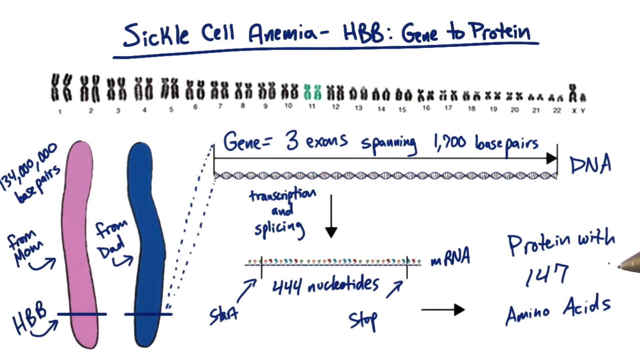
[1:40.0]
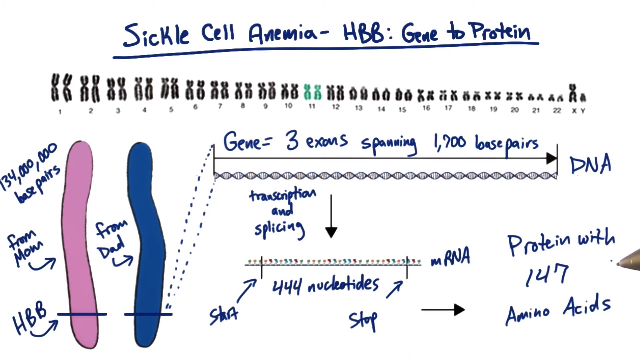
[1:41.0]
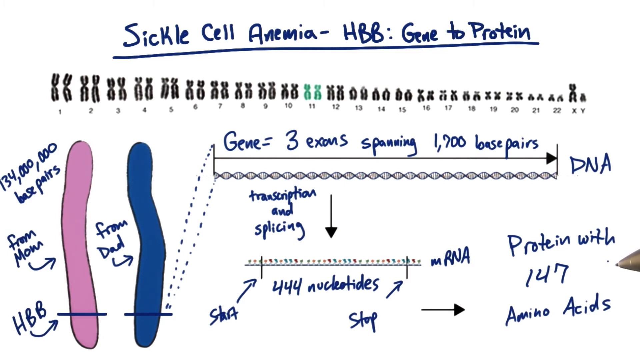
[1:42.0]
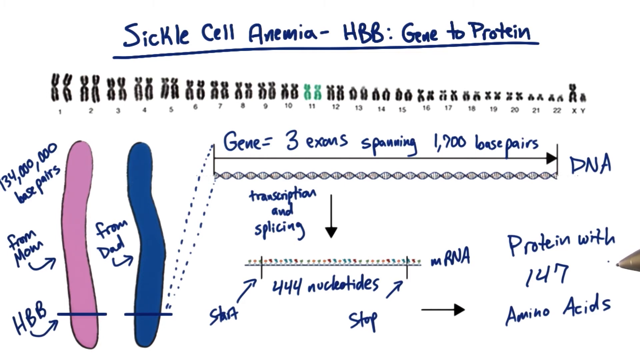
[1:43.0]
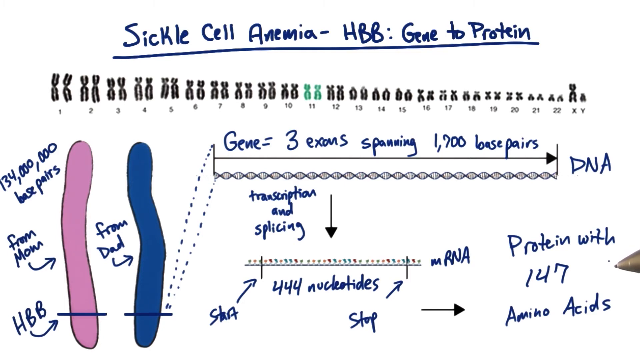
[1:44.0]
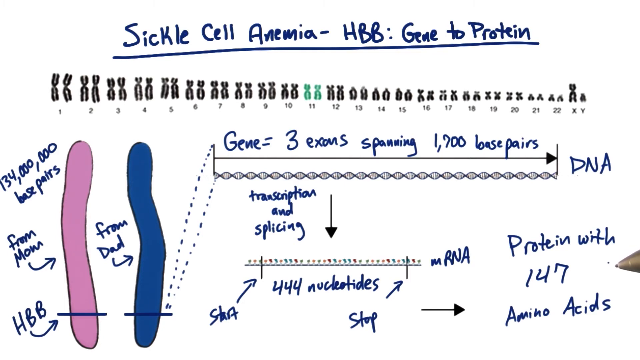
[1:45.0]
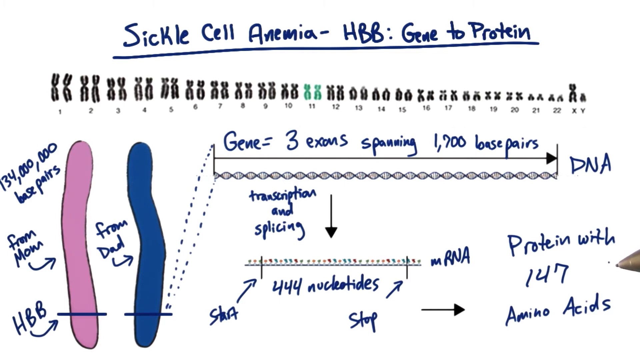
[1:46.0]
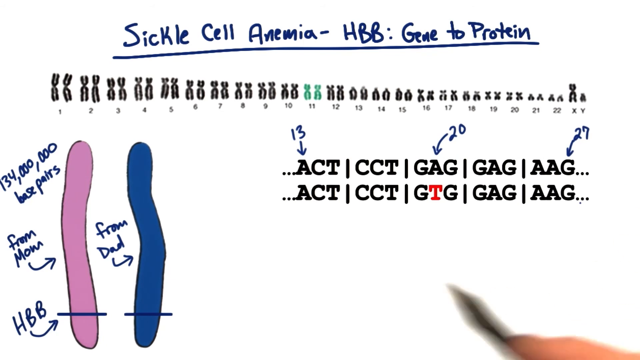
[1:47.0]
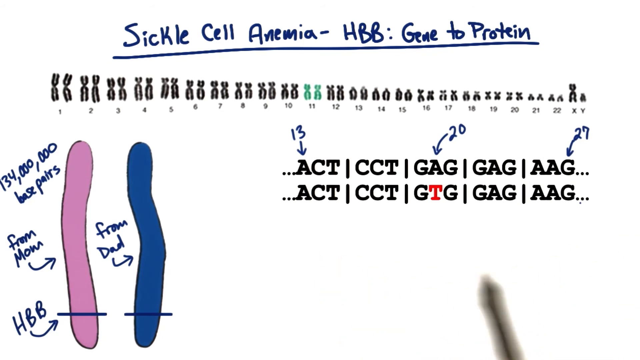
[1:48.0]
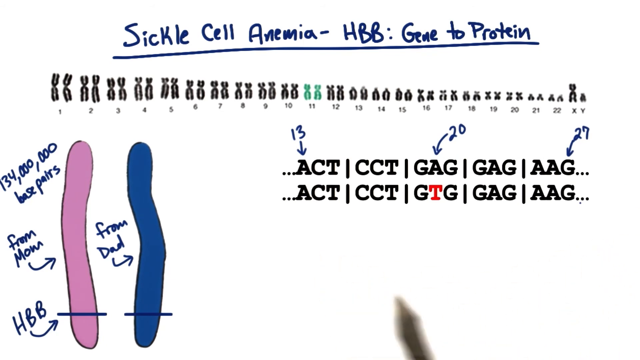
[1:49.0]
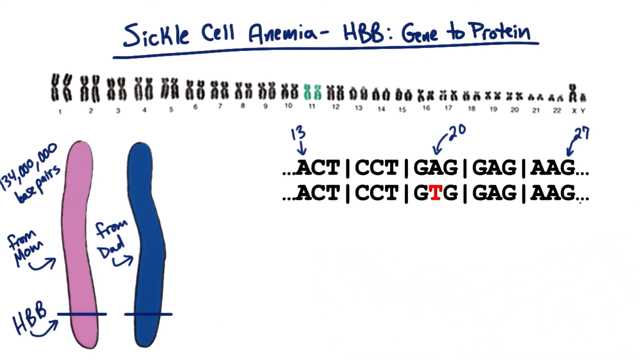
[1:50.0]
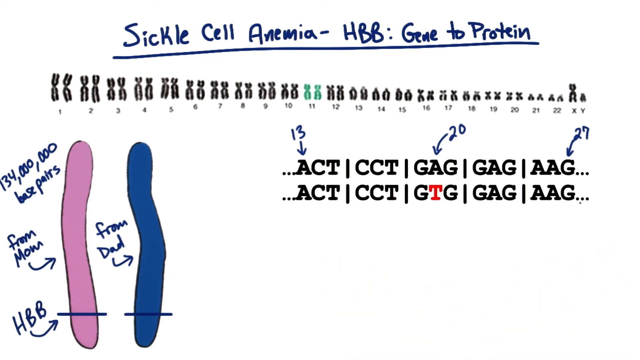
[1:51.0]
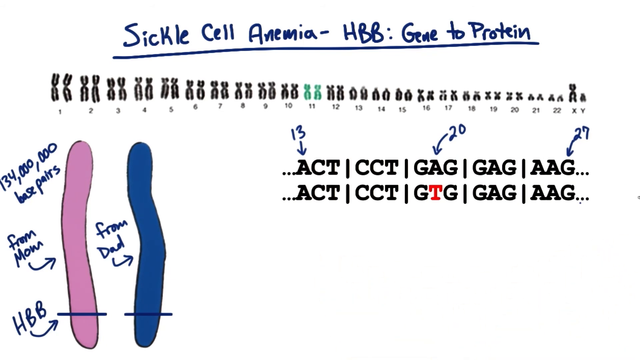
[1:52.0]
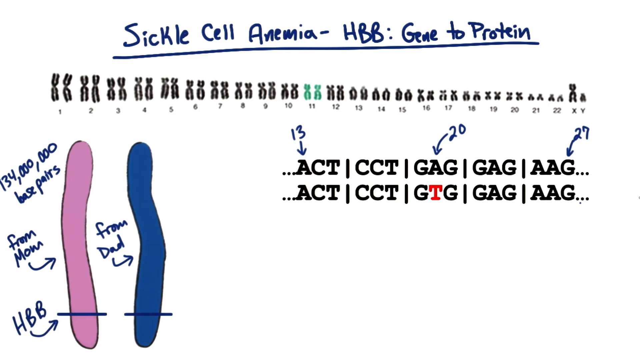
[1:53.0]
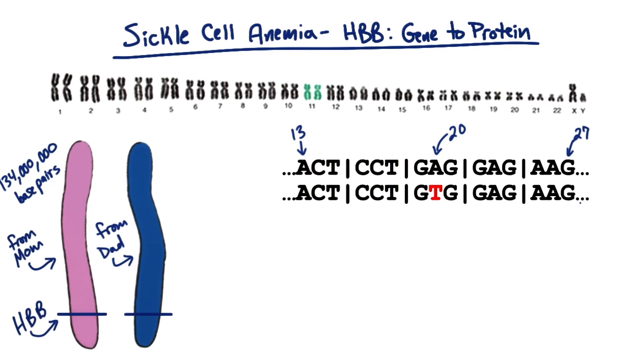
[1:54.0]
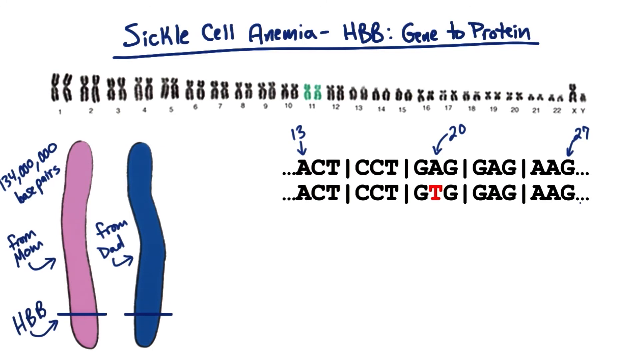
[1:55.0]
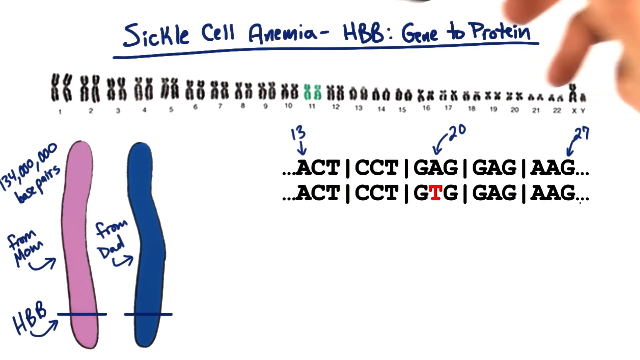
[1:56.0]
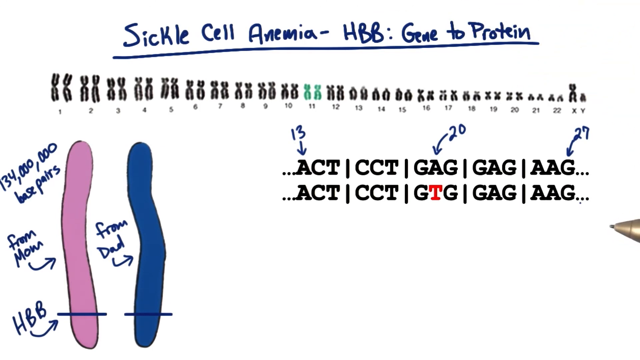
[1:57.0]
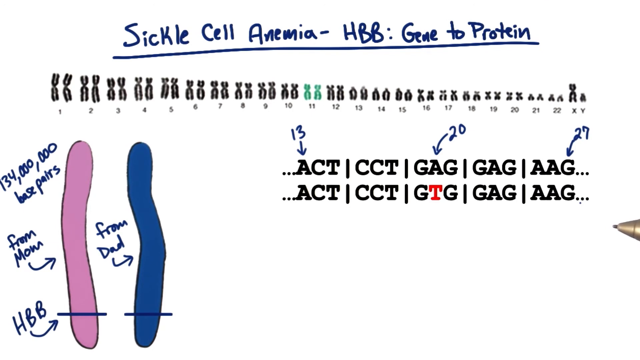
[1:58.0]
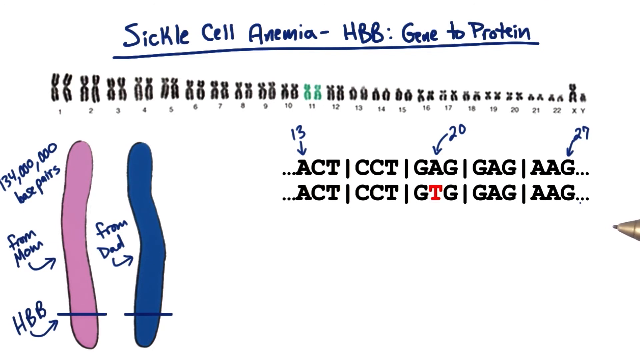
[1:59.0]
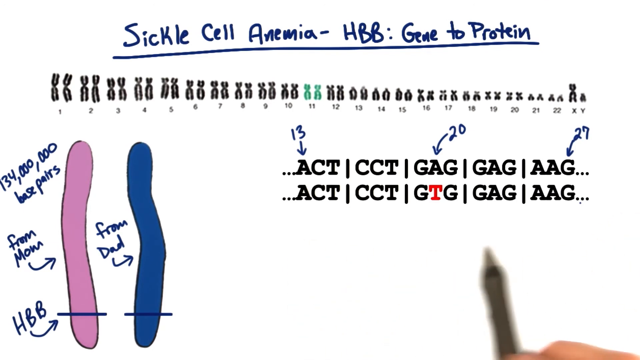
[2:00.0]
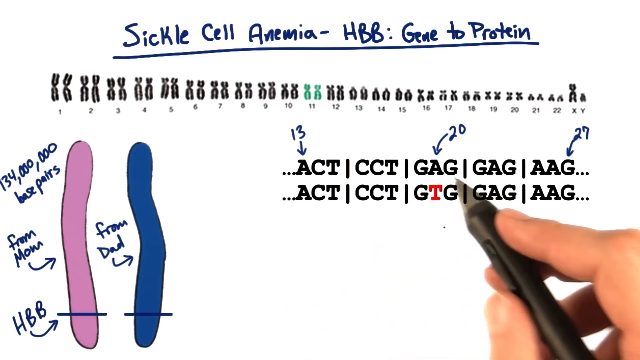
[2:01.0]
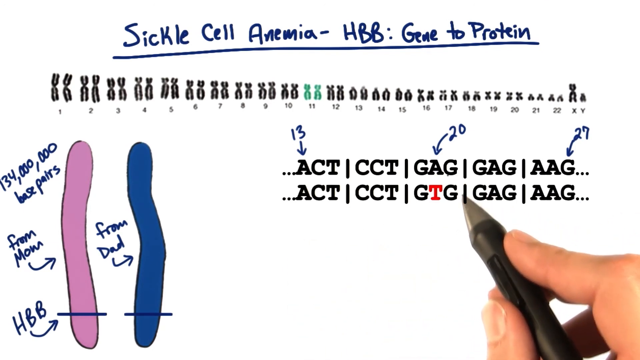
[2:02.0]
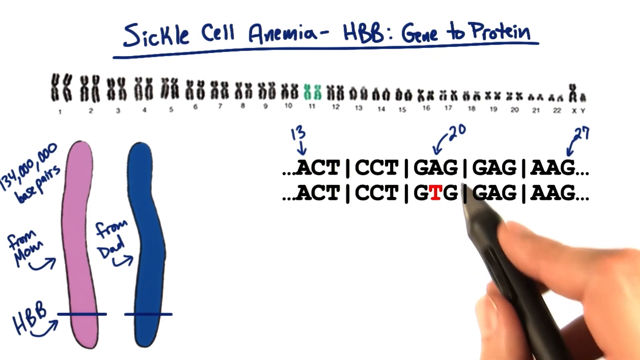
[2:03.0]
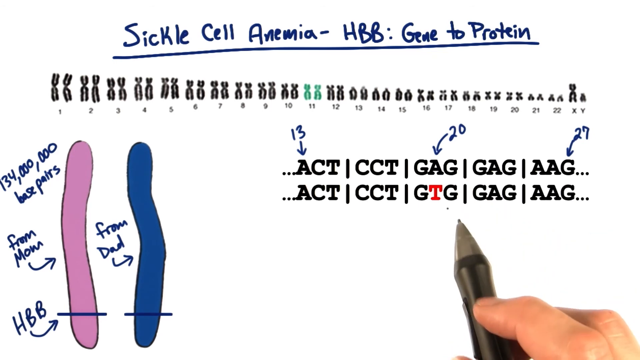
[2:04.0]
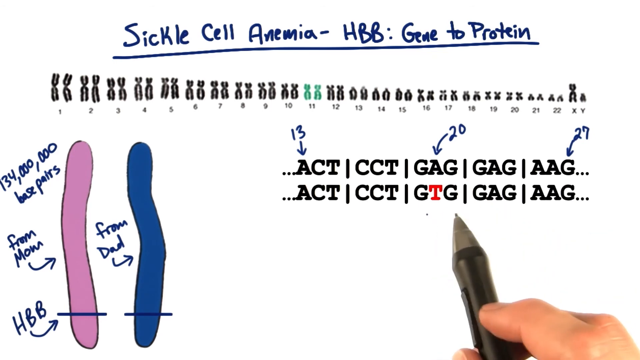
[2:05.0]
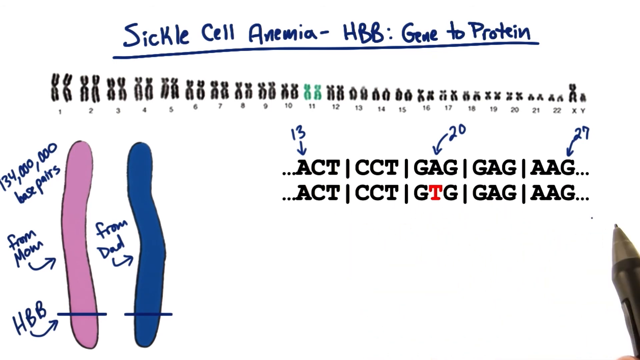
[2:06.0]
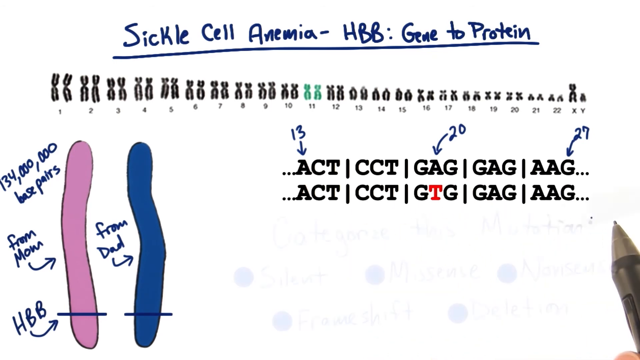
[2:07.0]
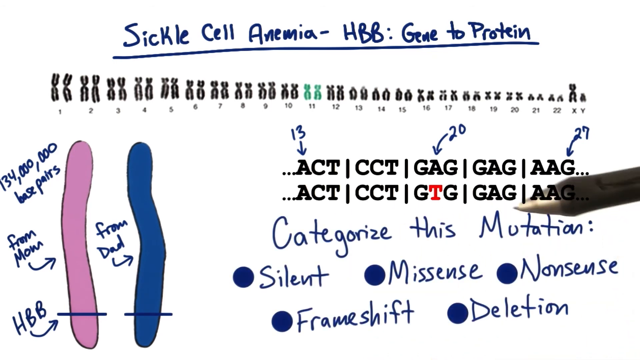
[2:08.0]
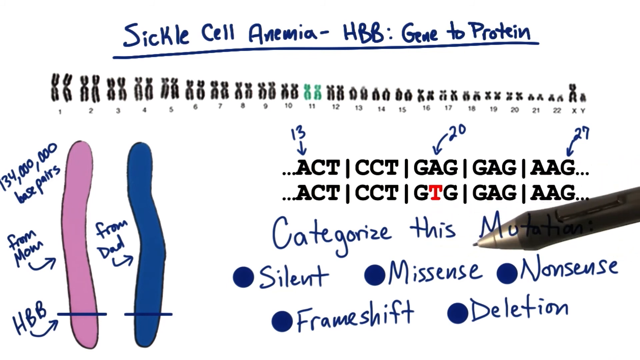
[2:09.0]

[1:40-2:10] The pen stays in the same spot, barely moving. The bottom right side of the slide disappears completely and is replaced by an amino acid code in two lines: the first reads "A C T C C T G A G G A G A G G" and the second "A C T C C T G T G G A G A A G." Numbers point to letters: a 13 to the first A of ACT on the first line, a 20 to the A of GAG on the first line, and a 27 to the G of AGG on the first line. On the second line, the T in the sequence GTG is red. The host hovers over GTG, and then handwritten notes appear in blue reading "categorize this mutation," with five options: silent, missense, nonsense, frameshift, and deletion.